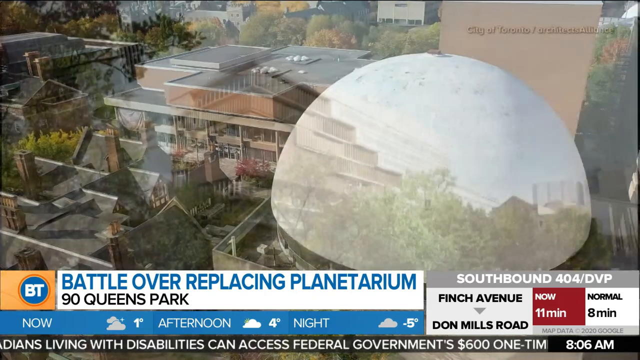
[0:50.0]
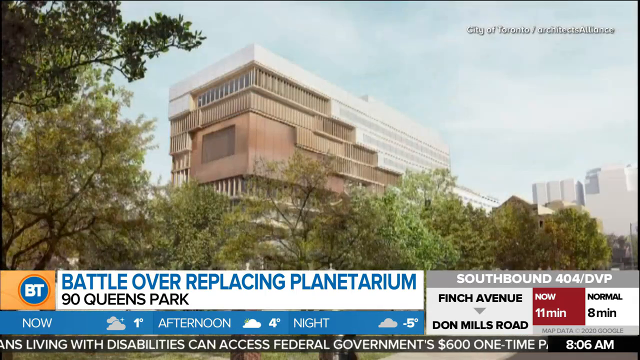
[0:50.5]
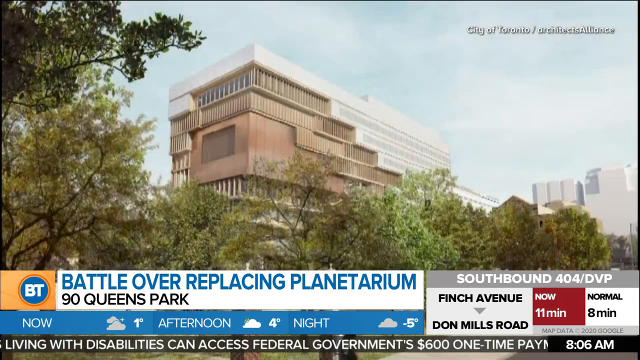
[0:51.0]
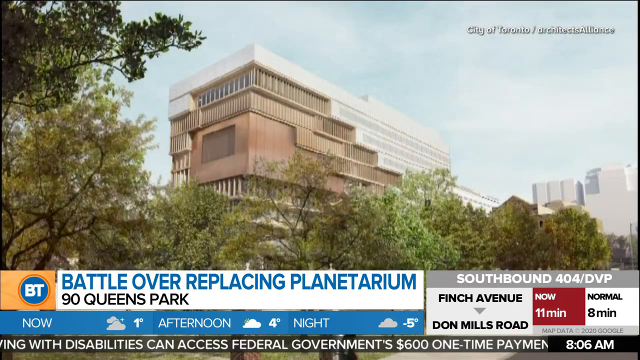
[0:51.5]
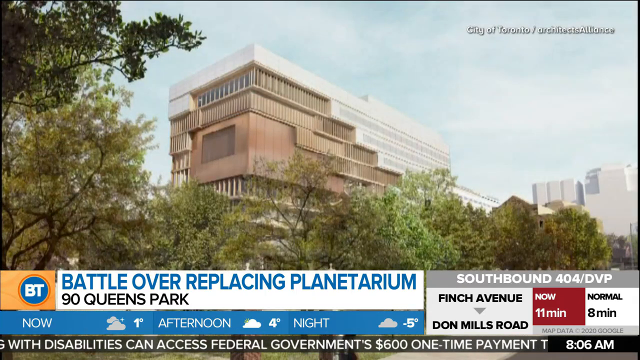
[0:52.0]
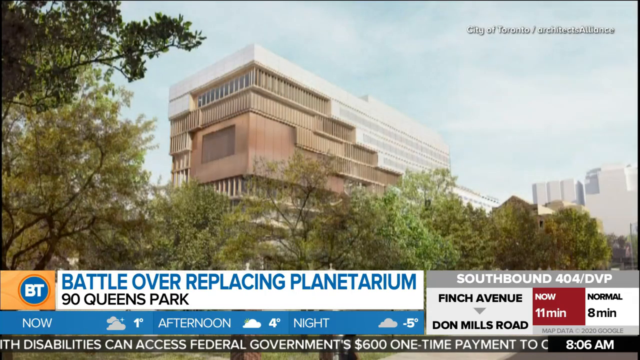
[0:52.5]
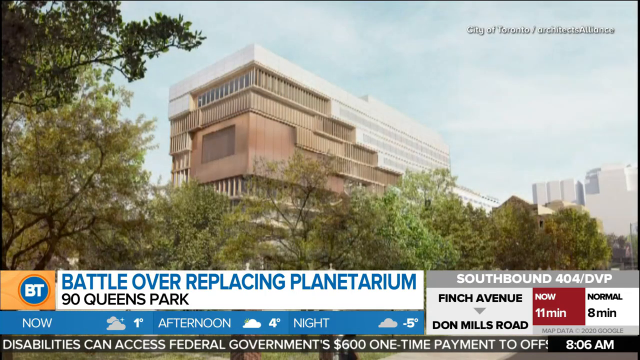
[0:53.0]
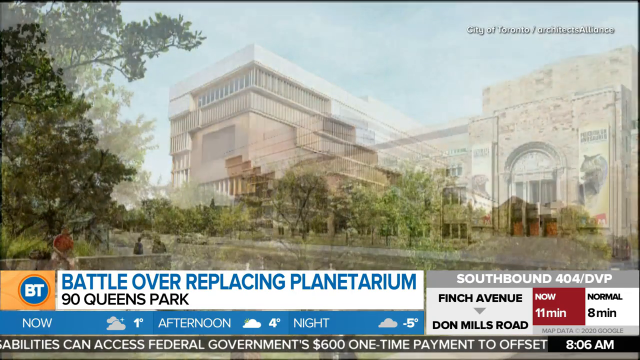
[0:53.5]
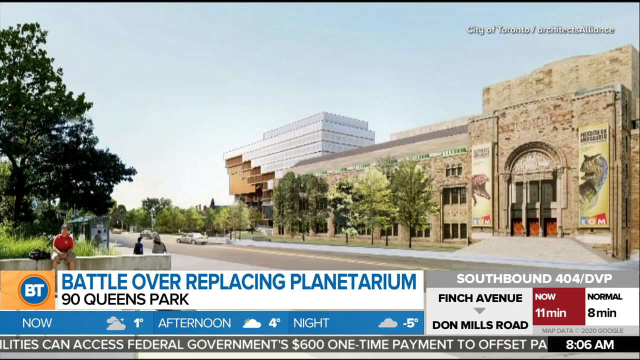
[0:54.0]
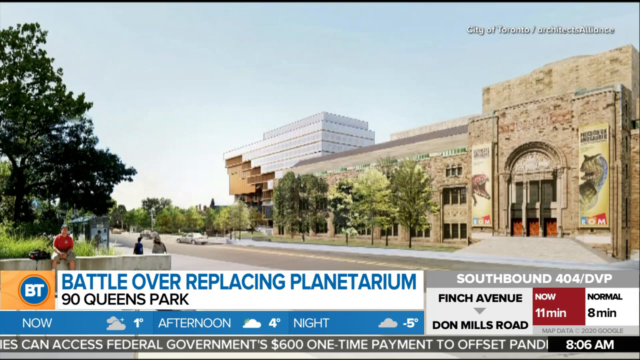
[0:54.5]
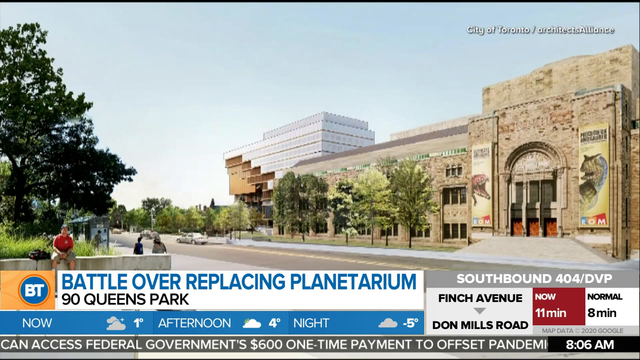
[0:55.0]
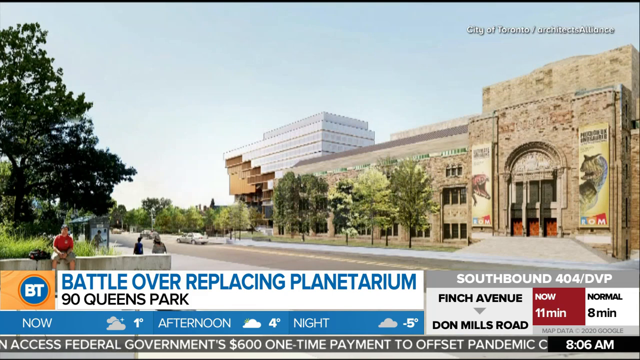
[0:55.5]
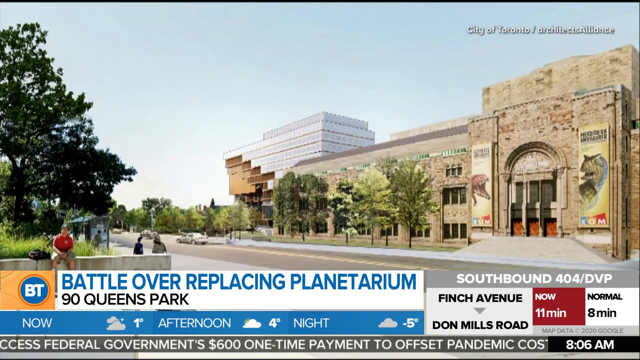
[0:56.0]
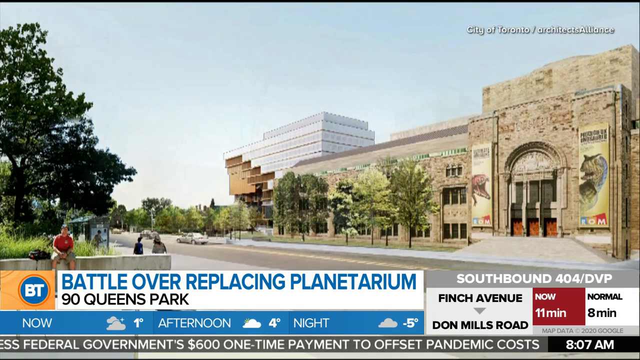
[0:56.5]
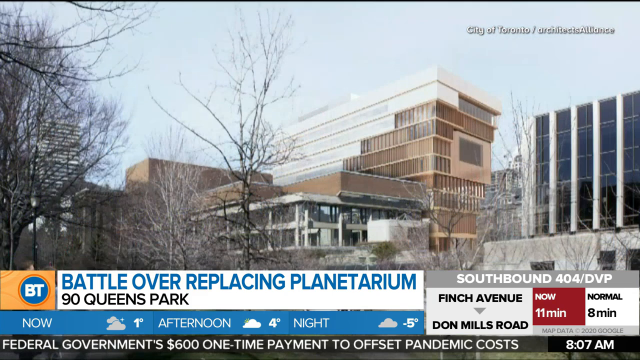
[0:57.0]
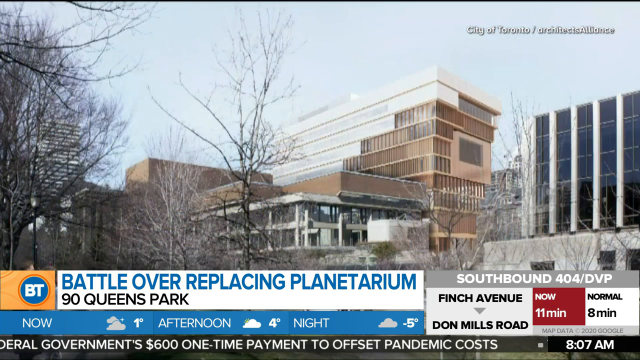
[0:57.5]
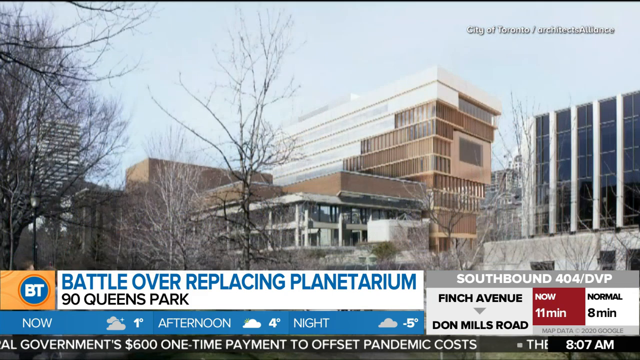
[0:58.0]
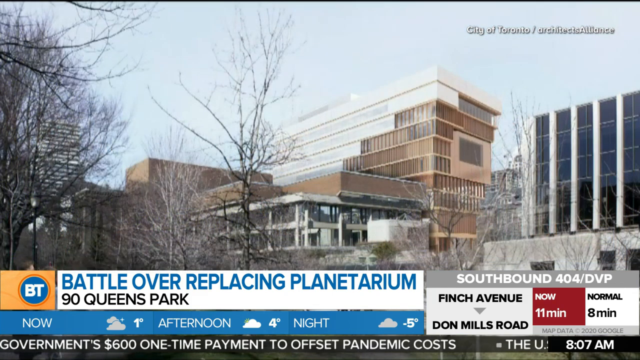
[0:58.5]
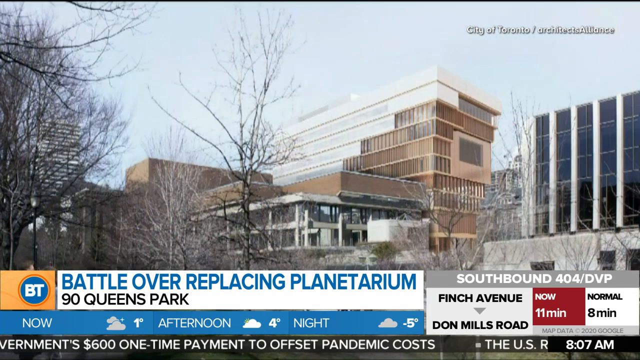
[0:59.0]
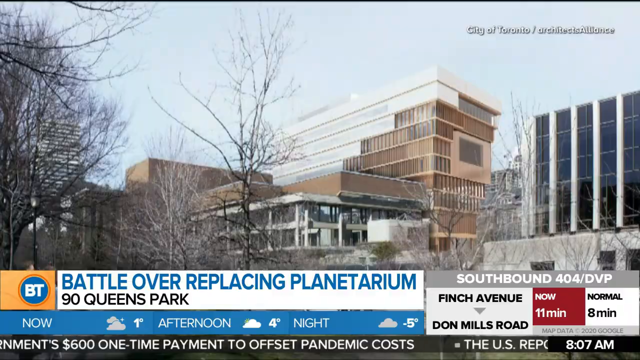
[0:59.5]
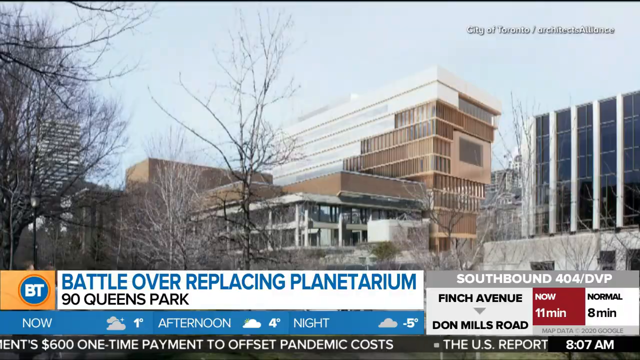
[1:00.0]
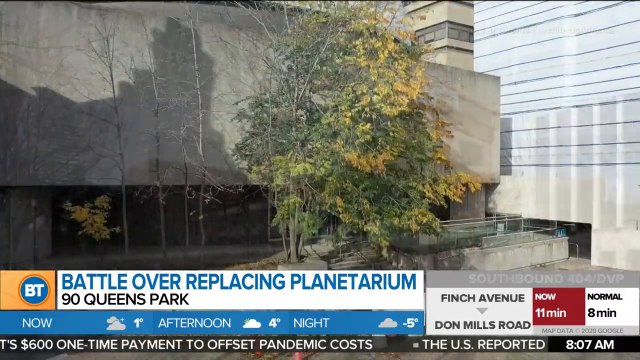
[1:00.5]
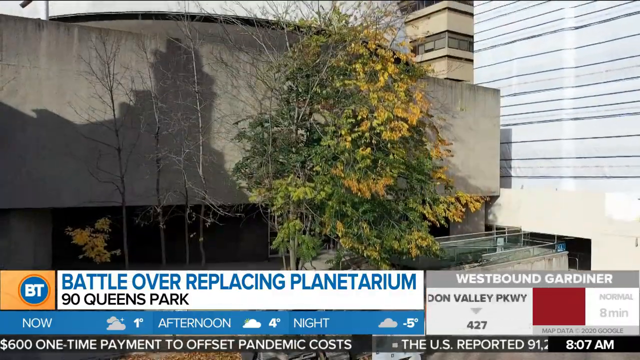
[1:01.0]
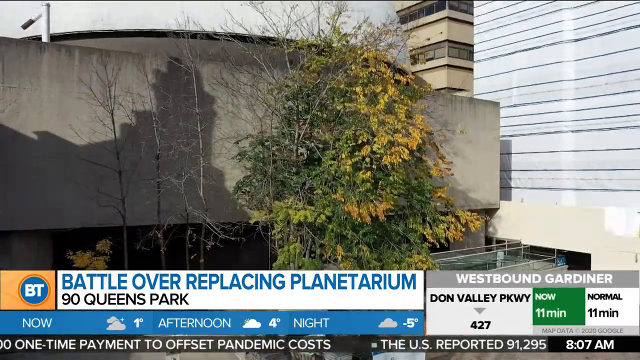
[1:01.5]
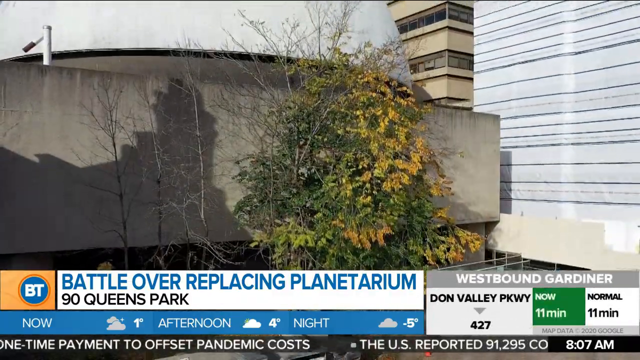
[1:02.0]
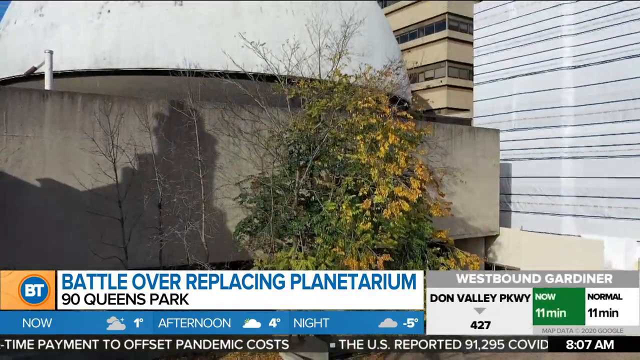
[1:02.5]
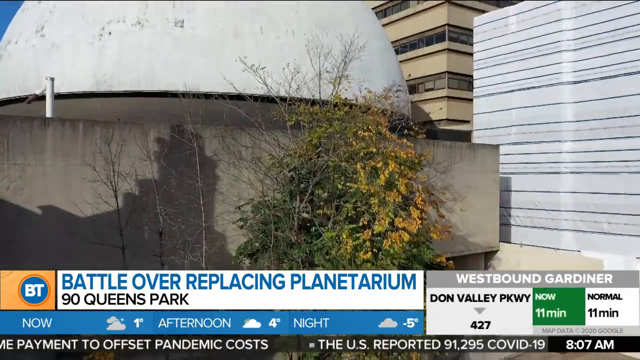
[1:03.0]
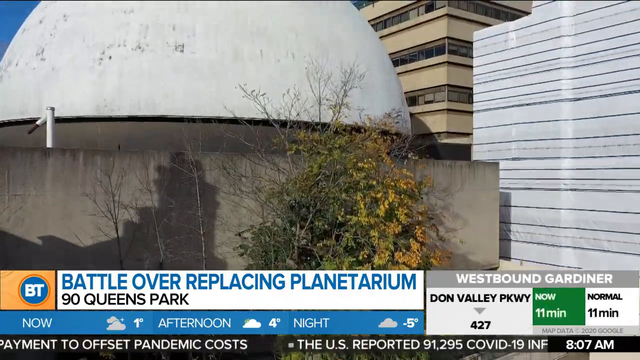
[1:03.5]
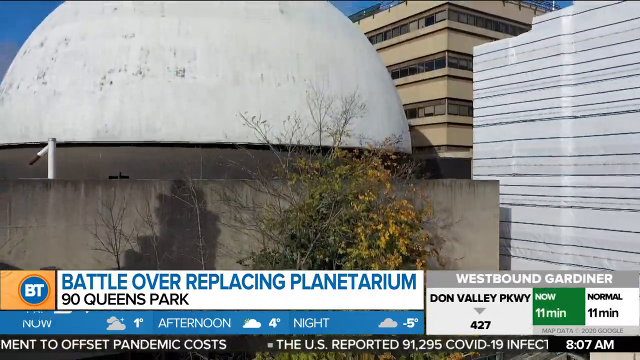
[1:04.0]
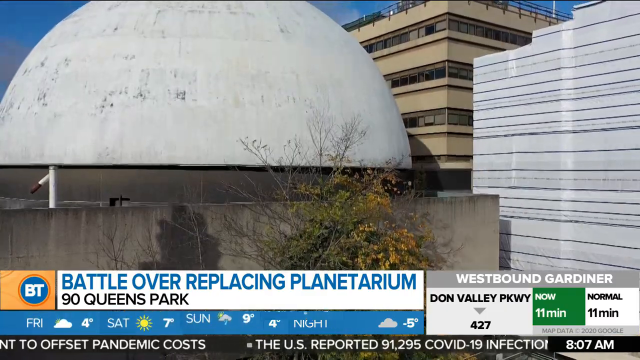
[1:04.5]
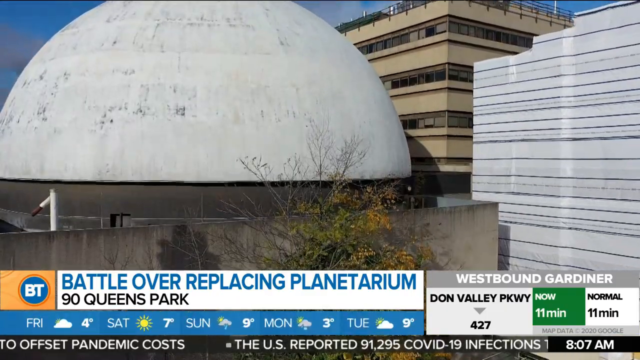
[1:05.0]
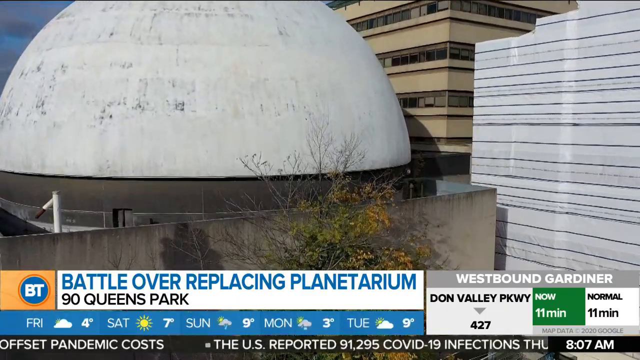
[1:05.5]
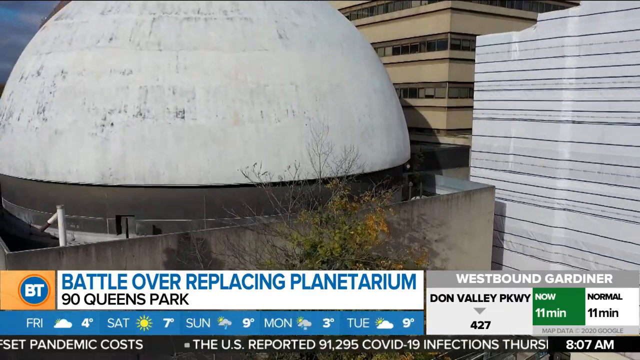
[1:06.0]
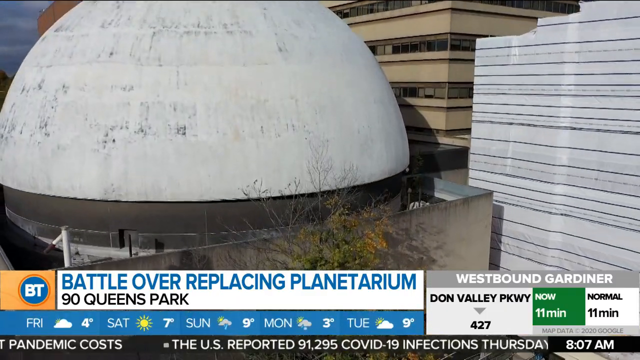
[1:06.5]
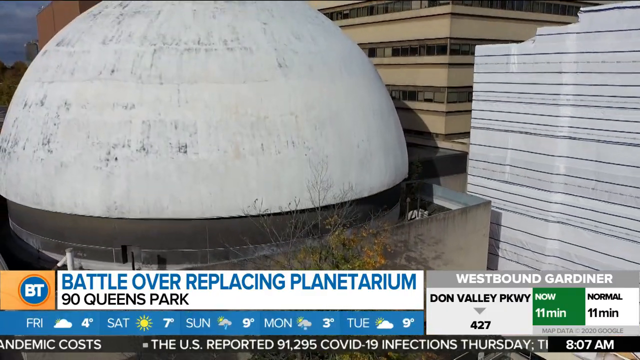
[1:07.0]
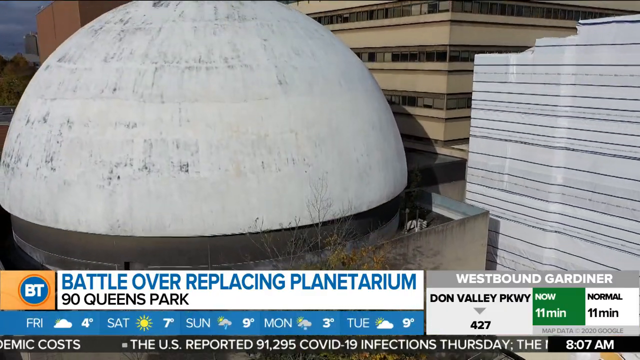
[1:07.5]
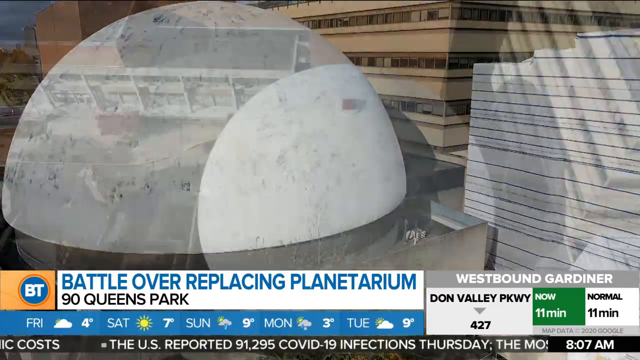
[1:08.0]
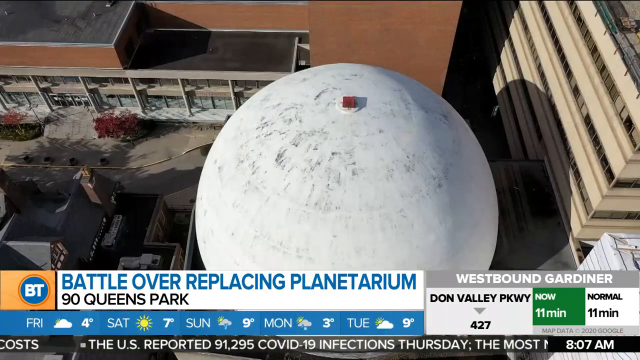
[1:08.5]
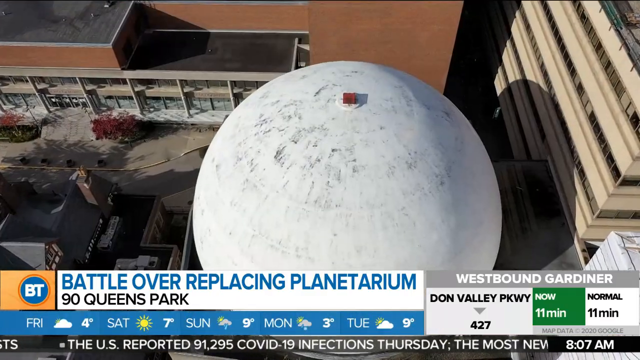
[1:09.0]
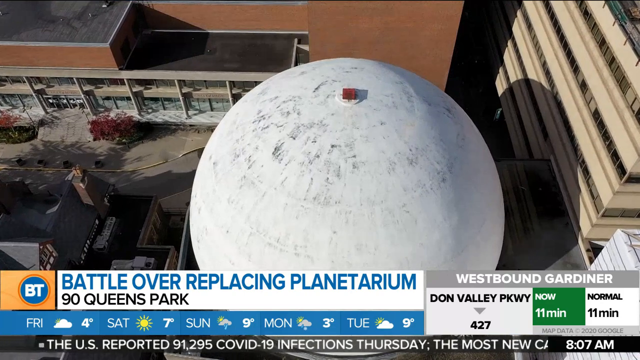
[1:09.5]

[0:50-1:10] Aerial views show skyscraper buildings in the city, with two or three buildings shown along with the tops of the buildings and the surrounding buildings in the area. The headline "battle over replacing planetarium" is shown at the bottom of the screen, along with a weather forecast, and a small headline appears and disappears. Different pictures of high skyscraper buildings are shown.